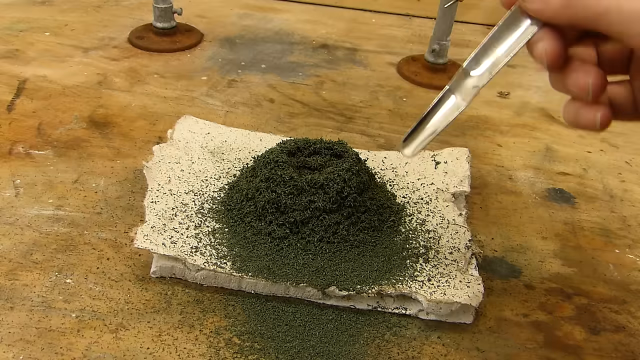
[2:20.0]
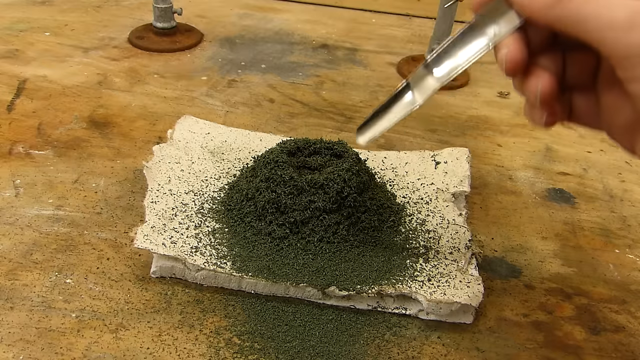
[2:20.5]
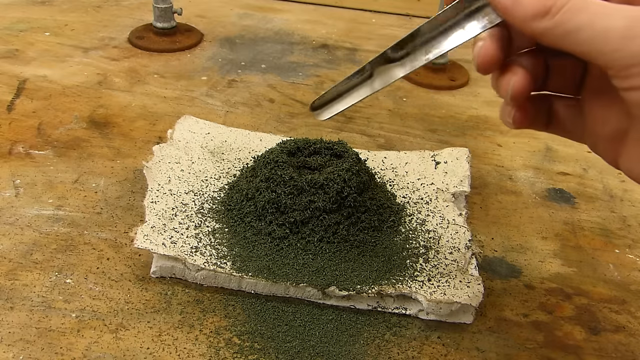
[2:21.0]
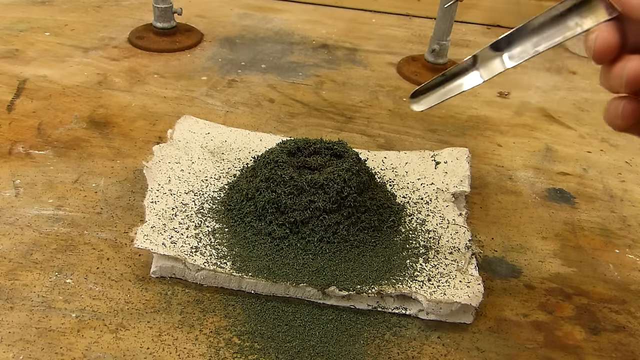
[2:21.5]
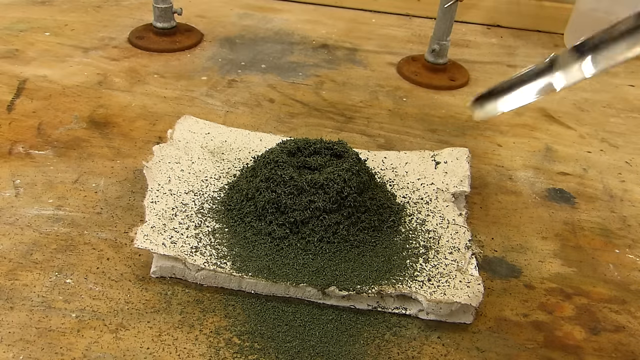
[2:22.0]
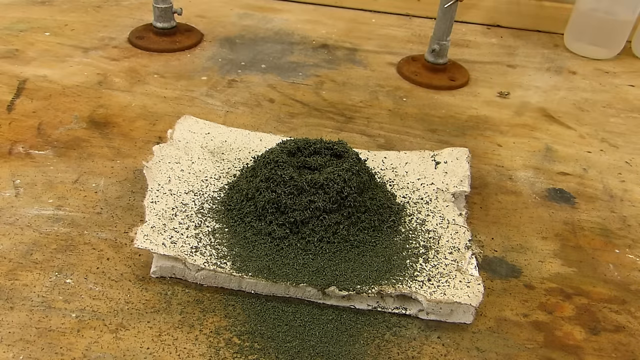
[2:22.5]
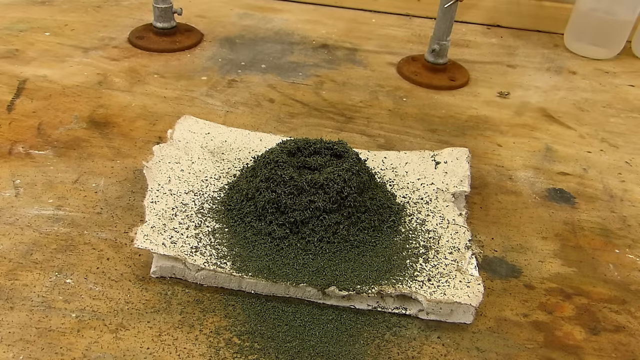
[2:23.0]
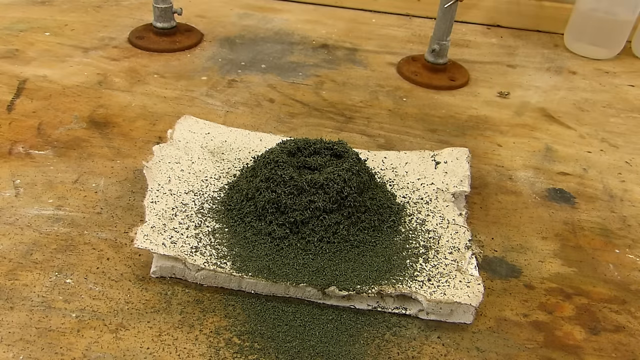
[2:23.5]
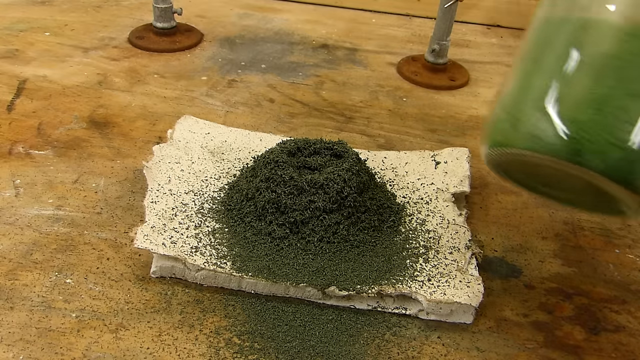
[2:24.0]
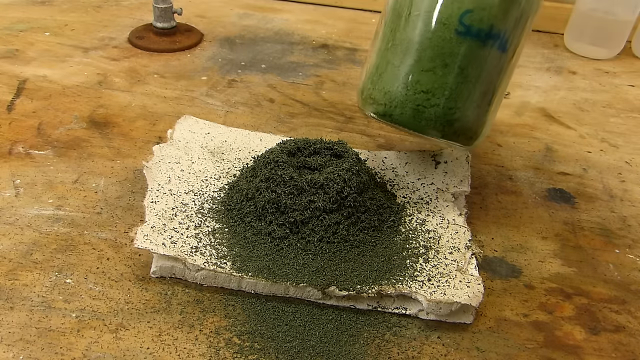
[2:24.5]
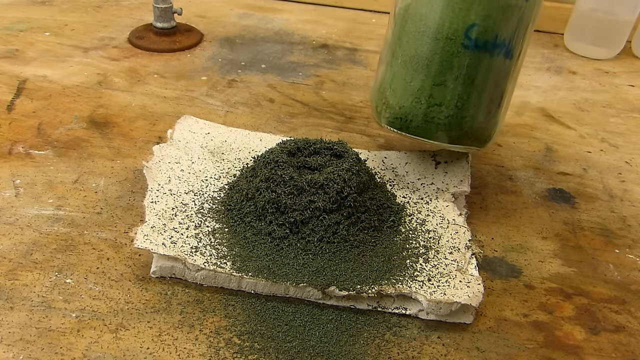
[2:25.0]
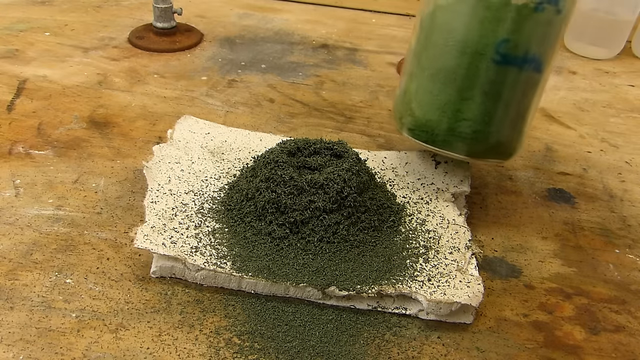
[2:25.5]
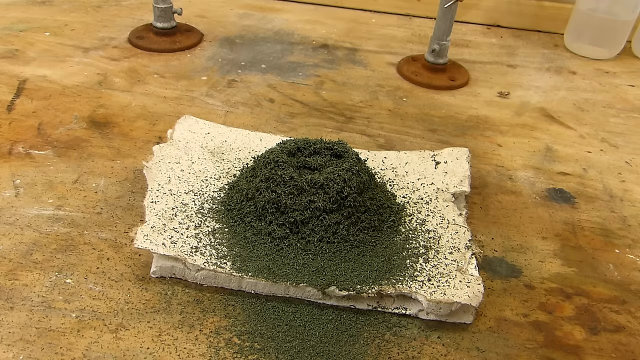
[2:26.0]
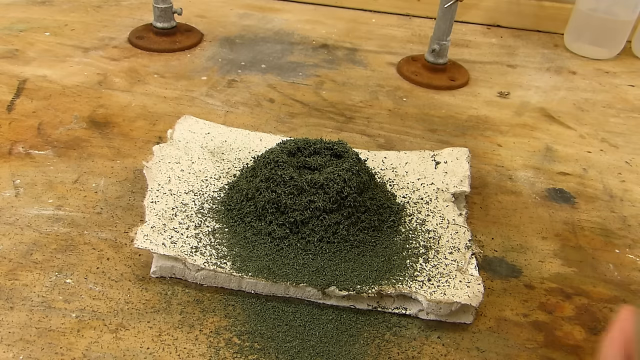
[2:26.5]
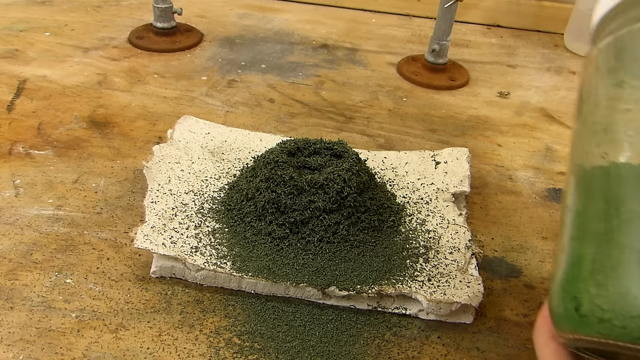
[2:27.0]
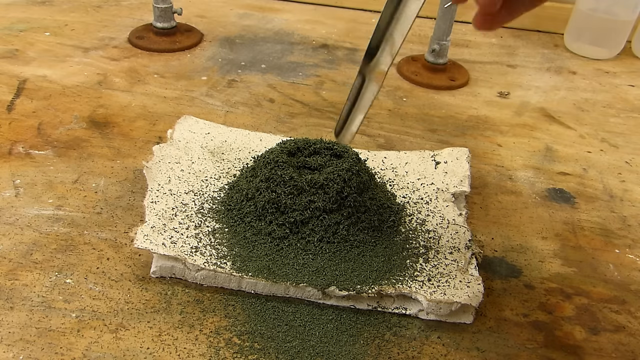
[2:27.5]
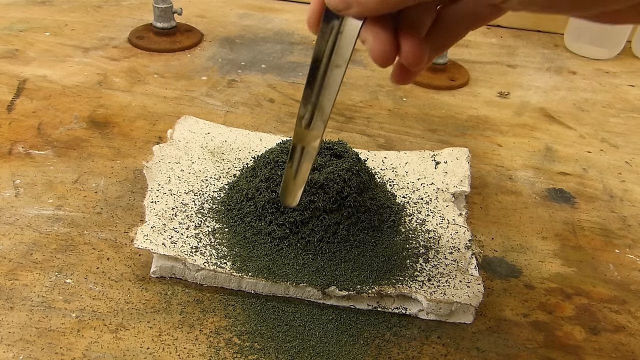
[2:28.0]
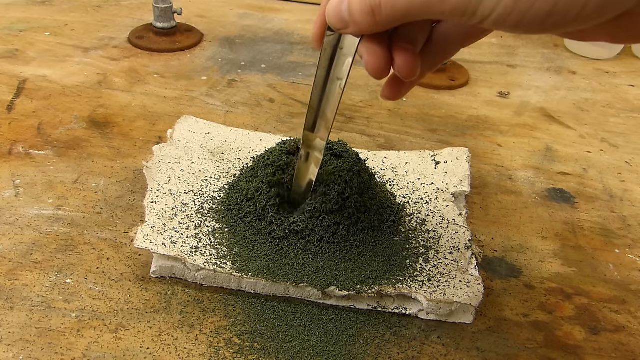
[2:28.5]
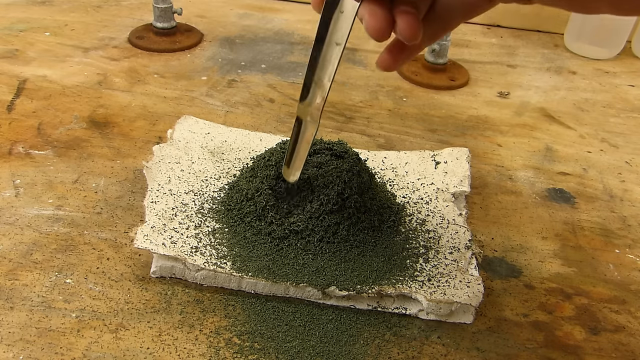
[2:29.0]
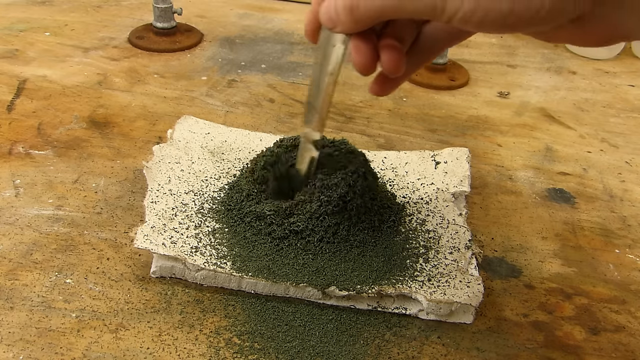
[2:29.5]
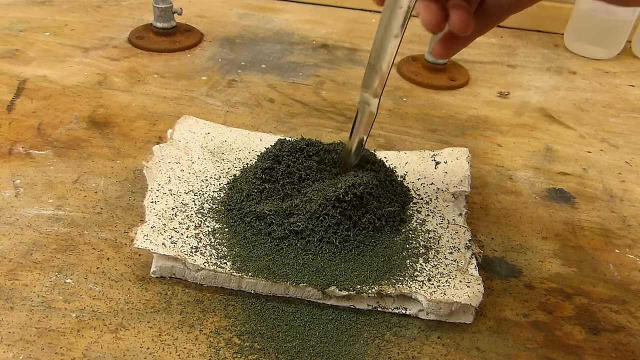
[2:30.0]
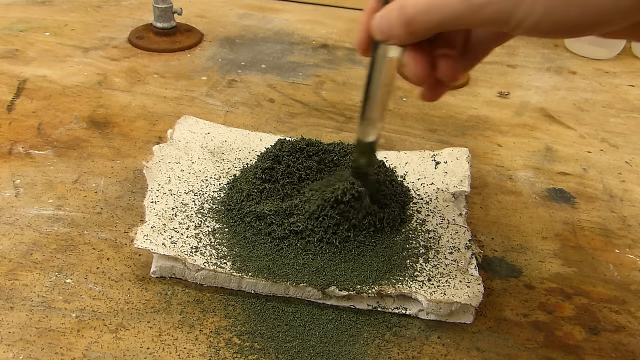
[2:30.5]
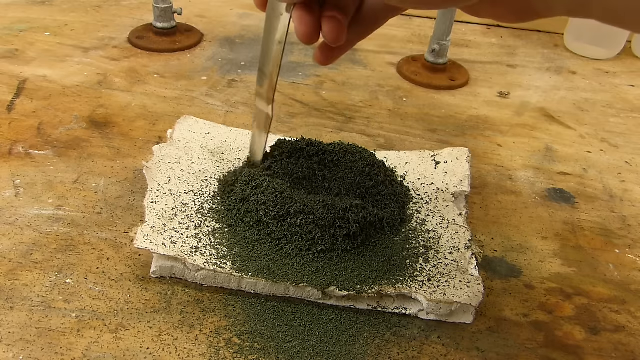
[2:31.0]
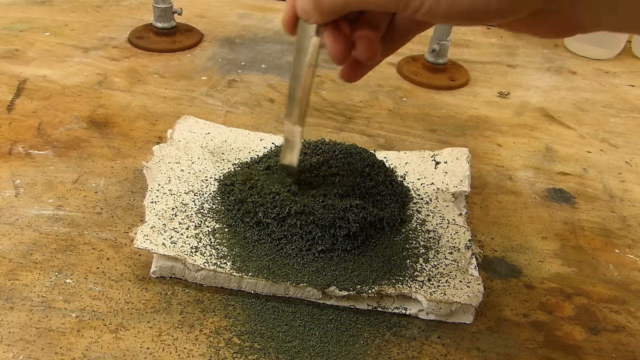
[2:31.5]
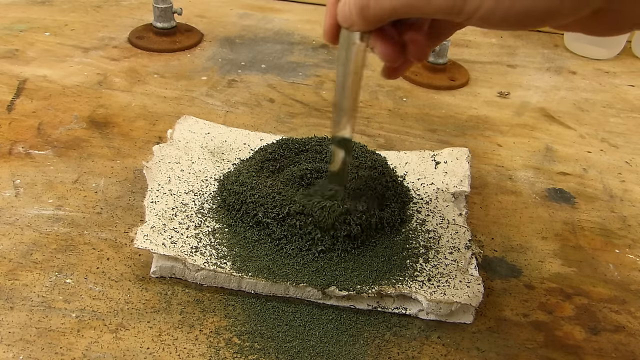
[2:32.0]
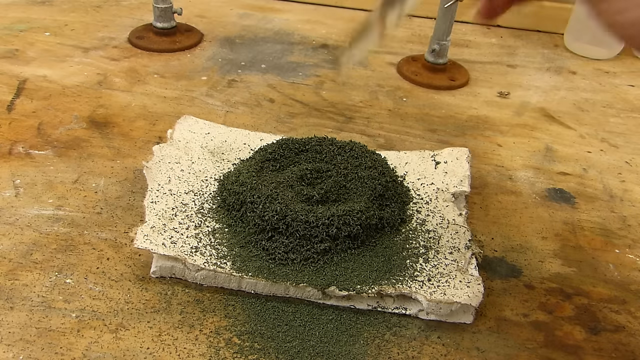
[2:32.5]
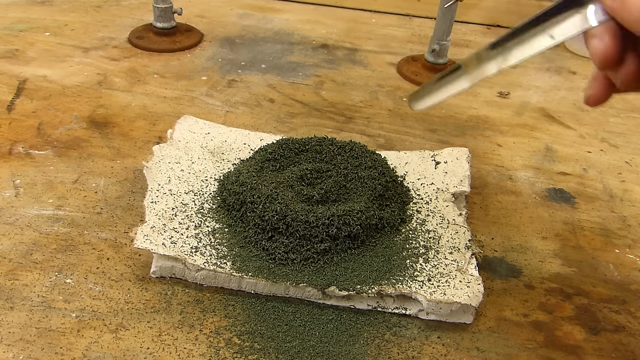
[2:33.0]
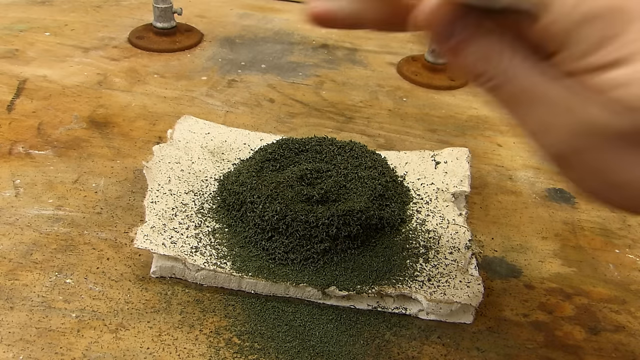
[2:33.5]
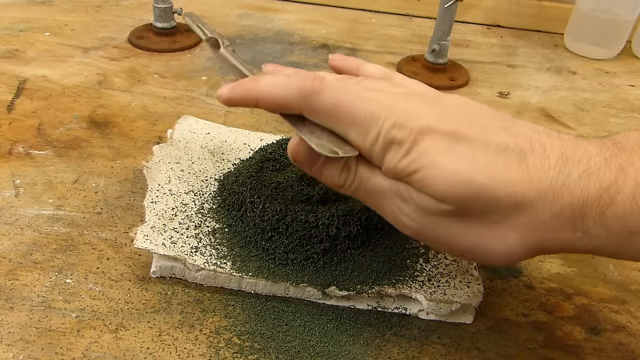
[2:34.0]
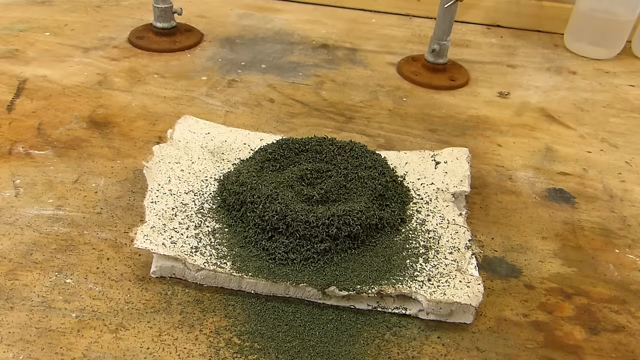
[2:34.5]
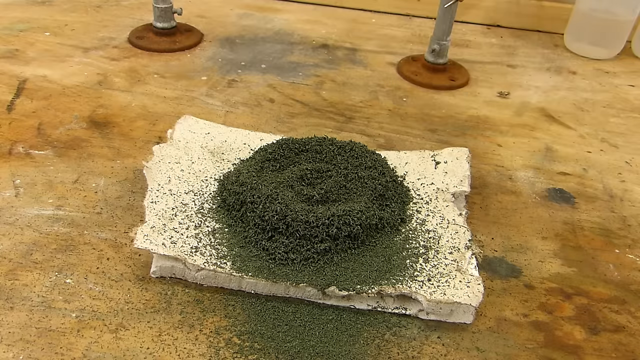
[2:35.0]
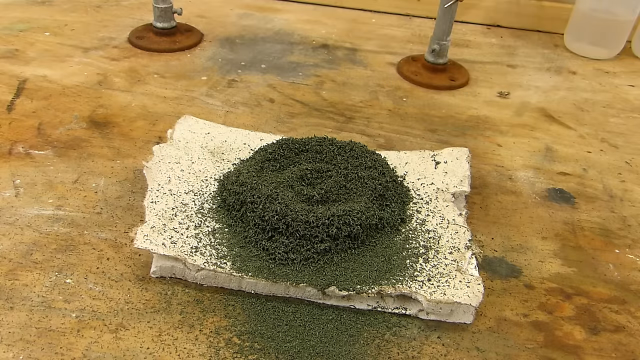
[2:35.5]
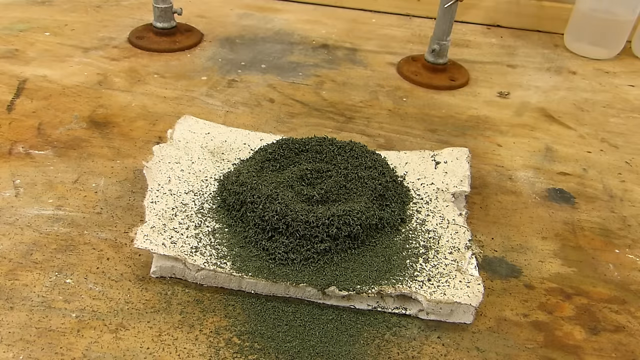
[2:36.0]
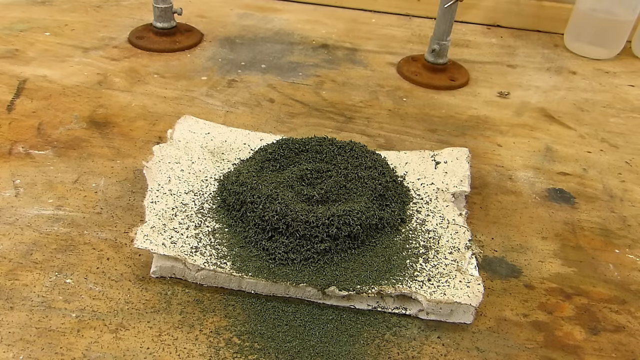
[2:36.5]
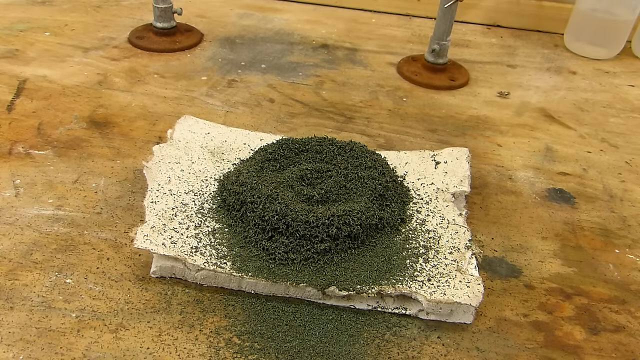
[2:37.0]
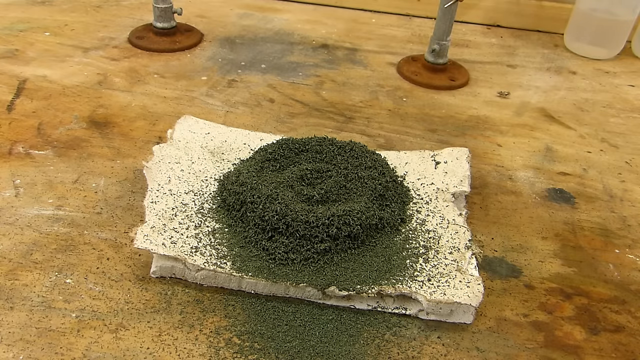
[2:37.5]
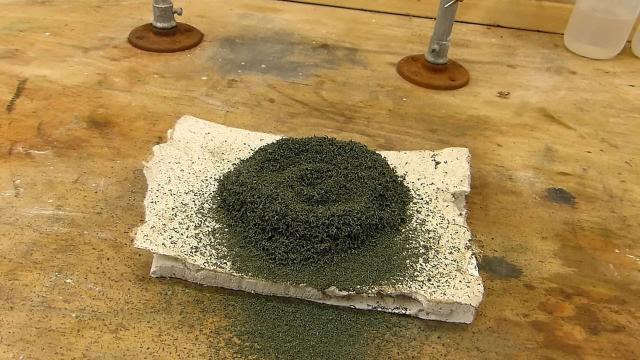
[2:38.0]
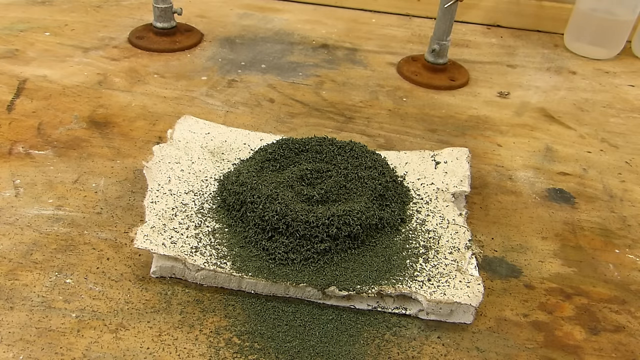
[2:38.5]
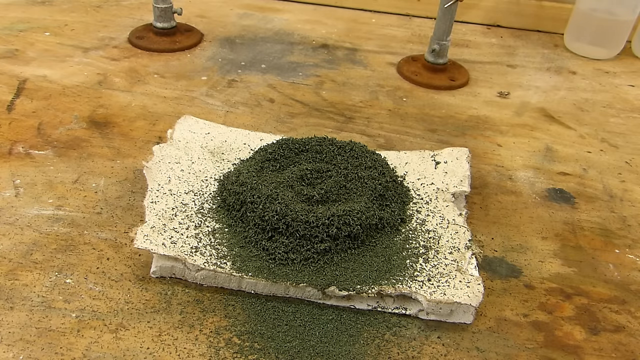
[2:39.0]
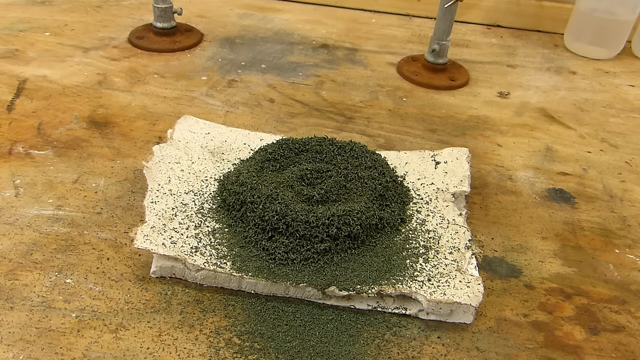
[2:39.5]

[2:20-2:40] With the orange pile turned into a black pile of substance, the person comes back; his hand and part of his arm are visible, but his face is not seen. He has silver metal scoopers, holding them with his thumb on the top part, the bottom part resting on the side of his middle finger, and the right side held by his pointer finger. He points all around the pile, and a jar of green stuff is visible. He starts using the spatula to sift through the pile, makes a little circular motion, and moves his hand again.